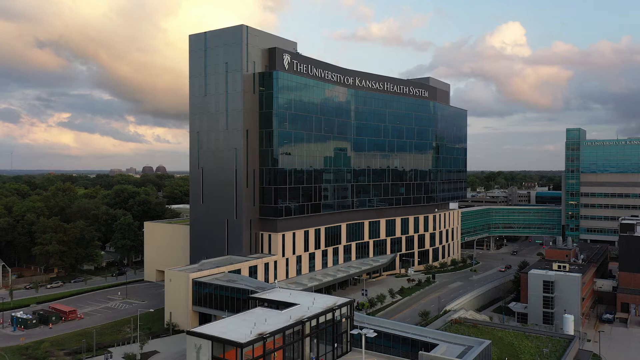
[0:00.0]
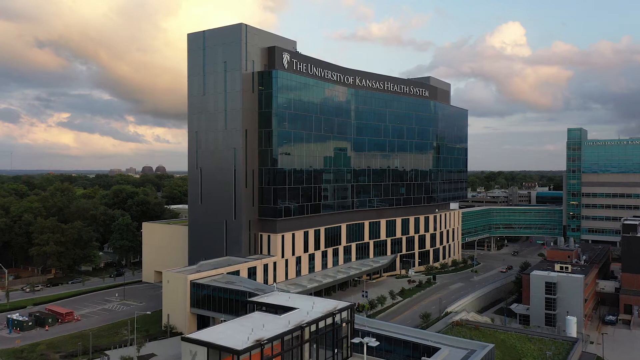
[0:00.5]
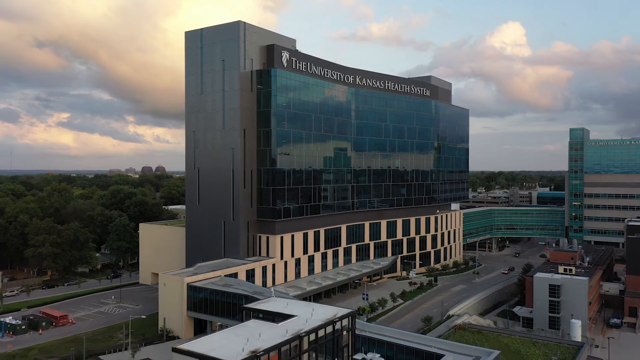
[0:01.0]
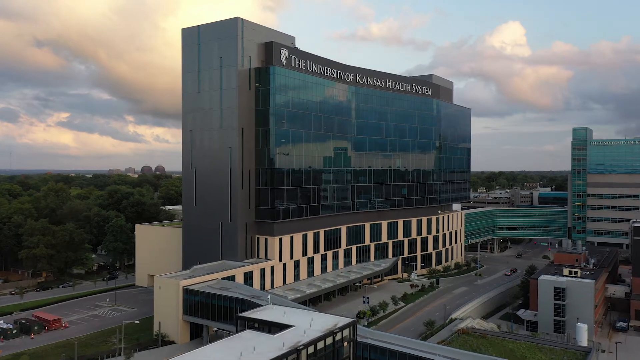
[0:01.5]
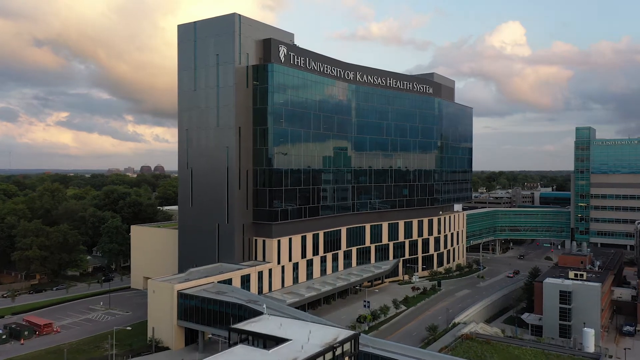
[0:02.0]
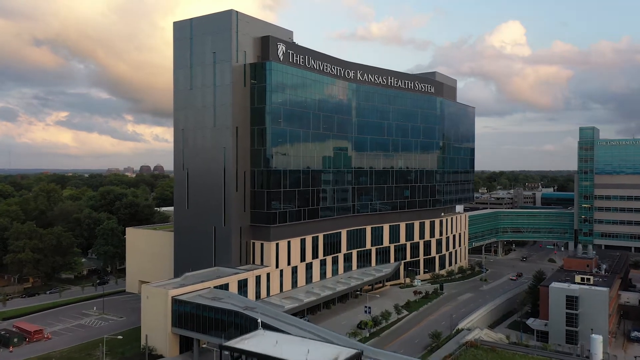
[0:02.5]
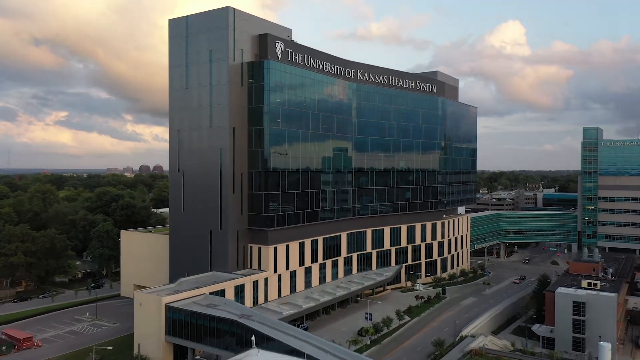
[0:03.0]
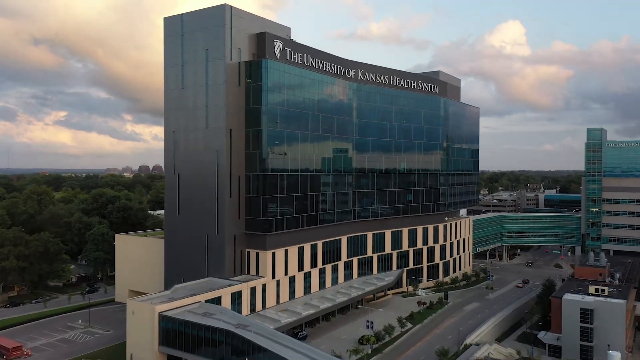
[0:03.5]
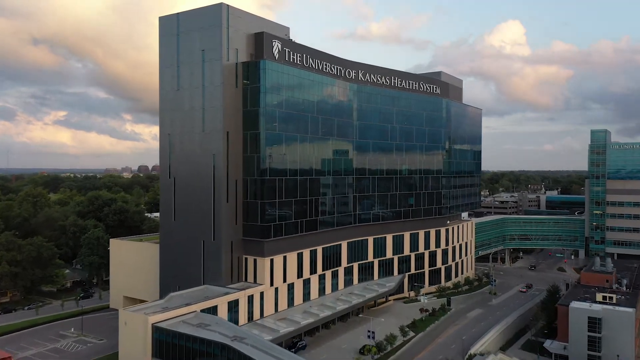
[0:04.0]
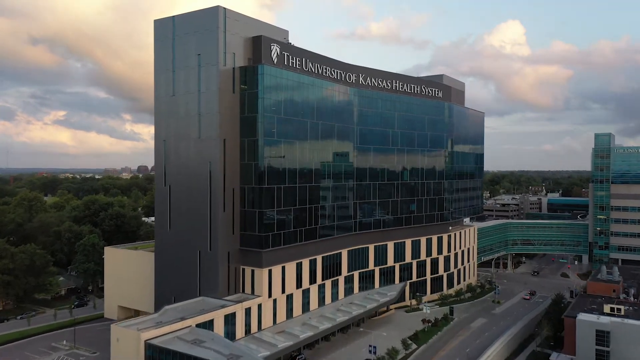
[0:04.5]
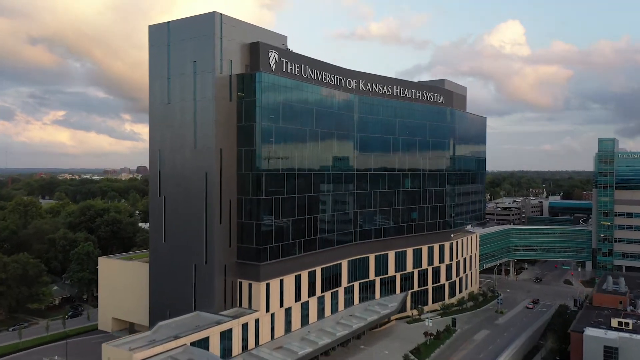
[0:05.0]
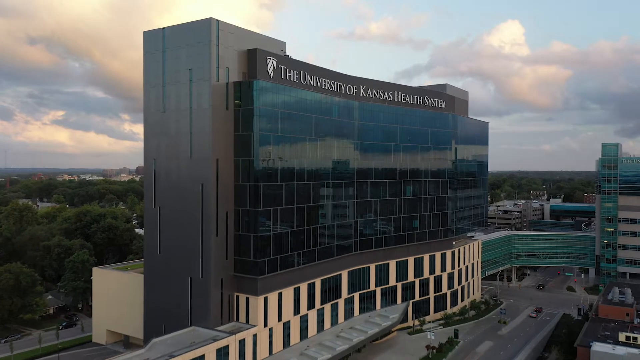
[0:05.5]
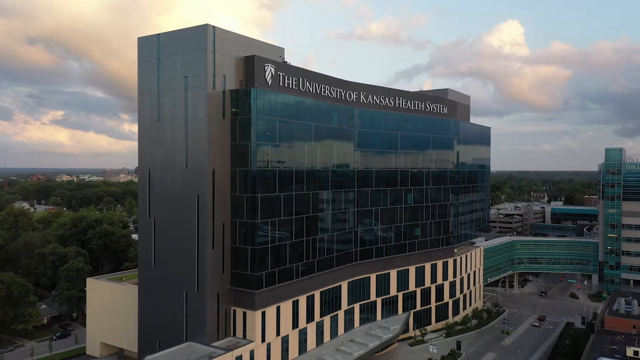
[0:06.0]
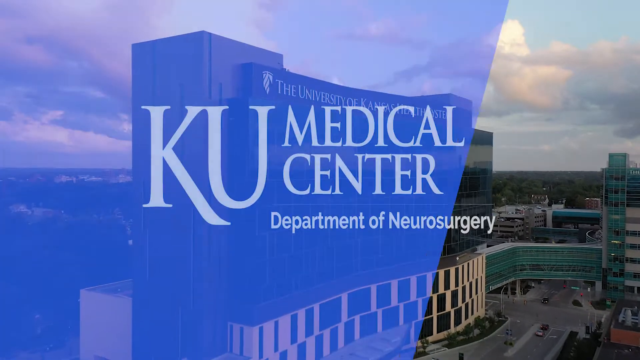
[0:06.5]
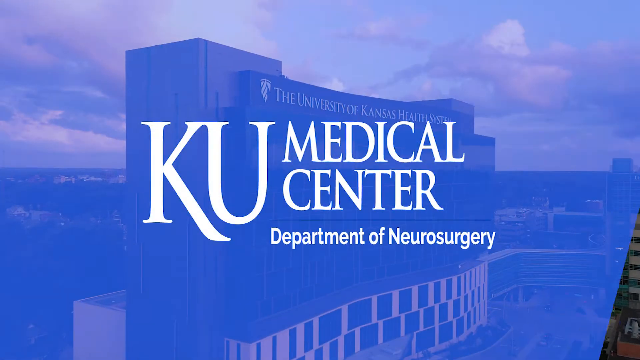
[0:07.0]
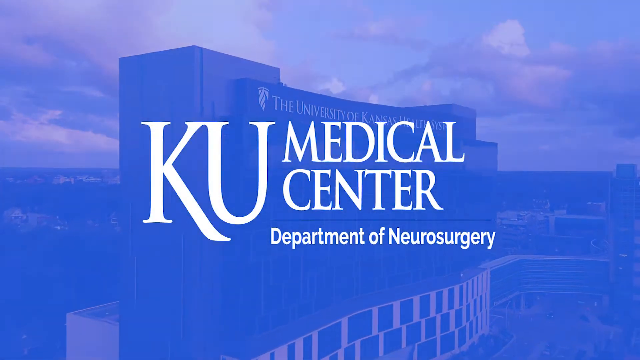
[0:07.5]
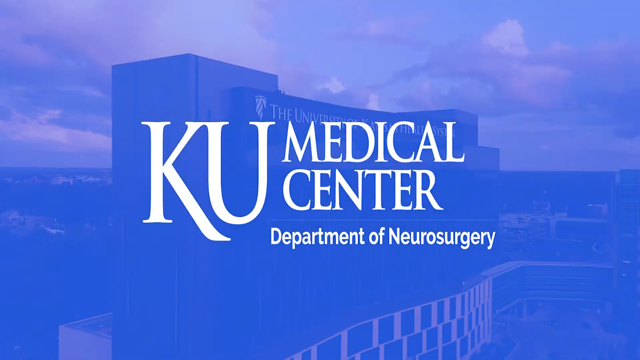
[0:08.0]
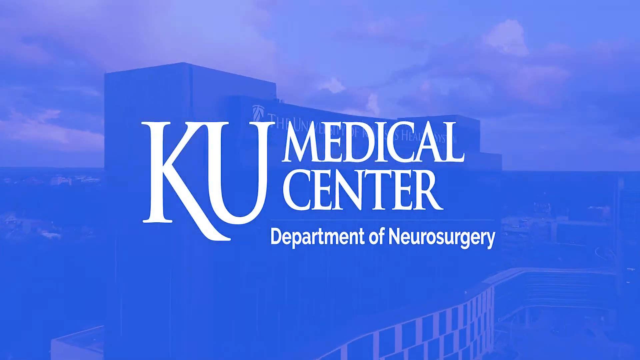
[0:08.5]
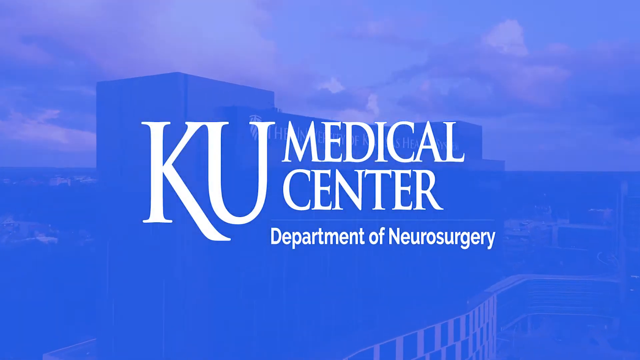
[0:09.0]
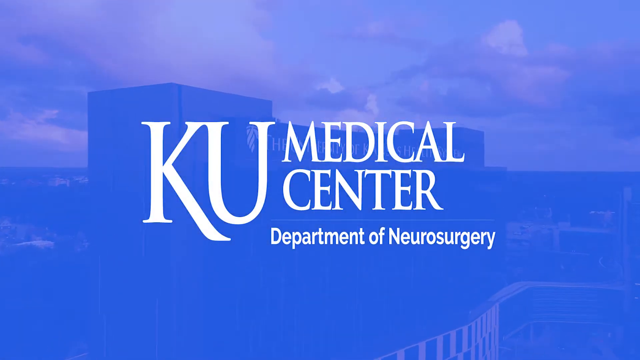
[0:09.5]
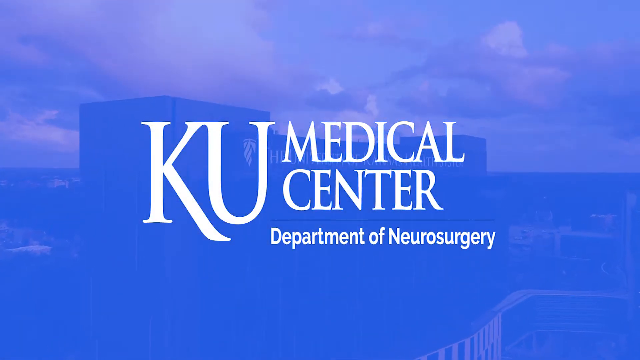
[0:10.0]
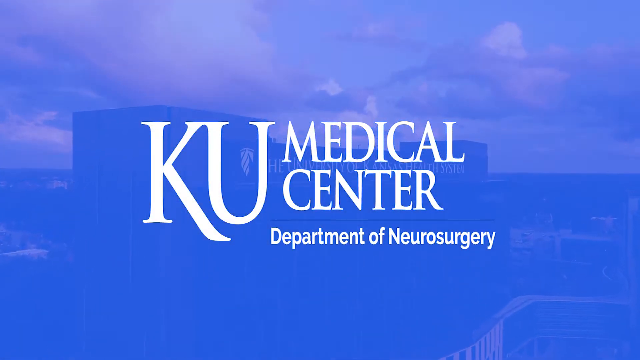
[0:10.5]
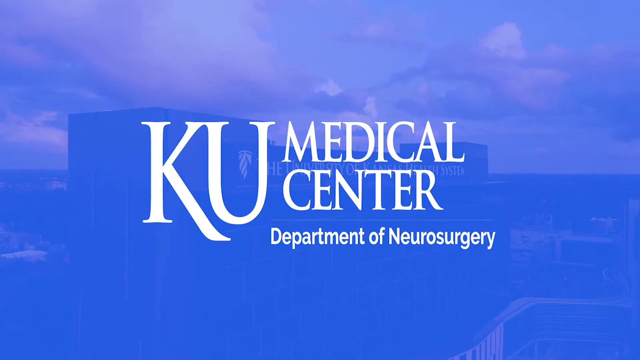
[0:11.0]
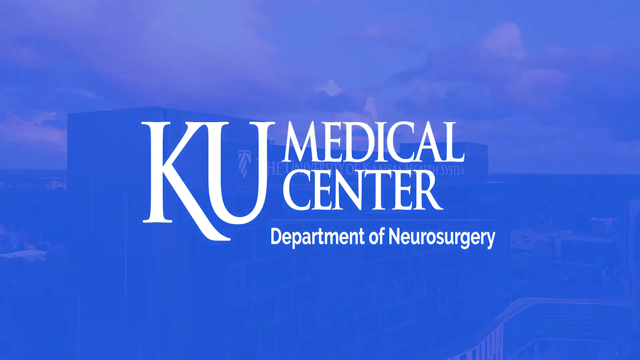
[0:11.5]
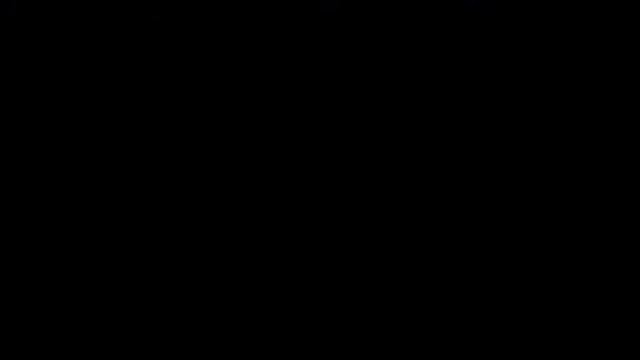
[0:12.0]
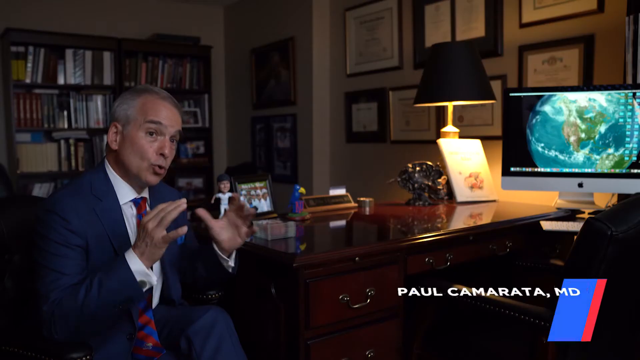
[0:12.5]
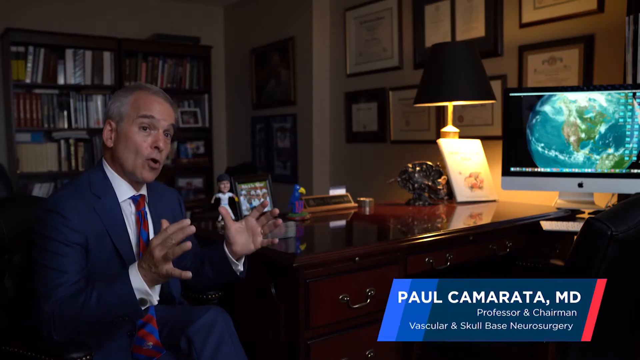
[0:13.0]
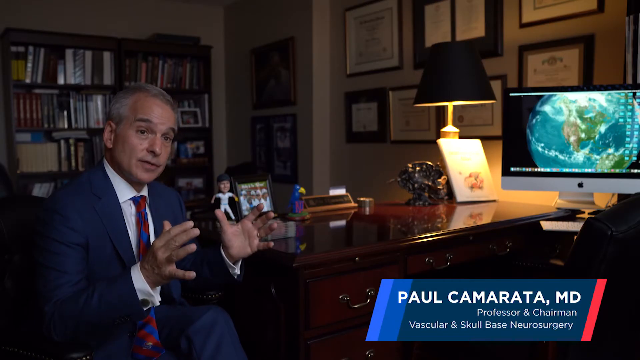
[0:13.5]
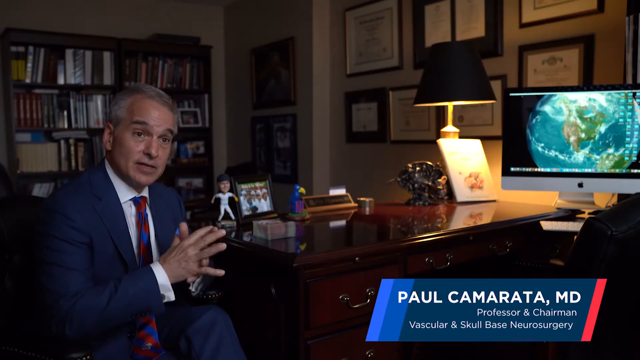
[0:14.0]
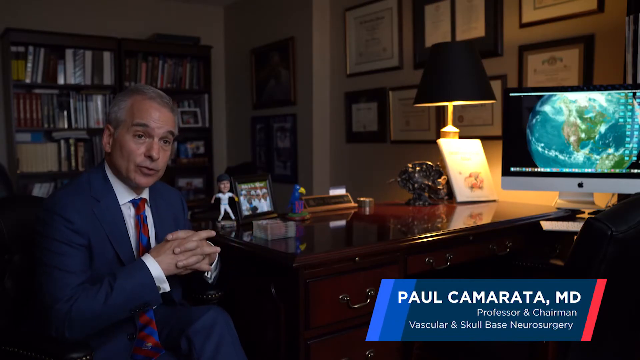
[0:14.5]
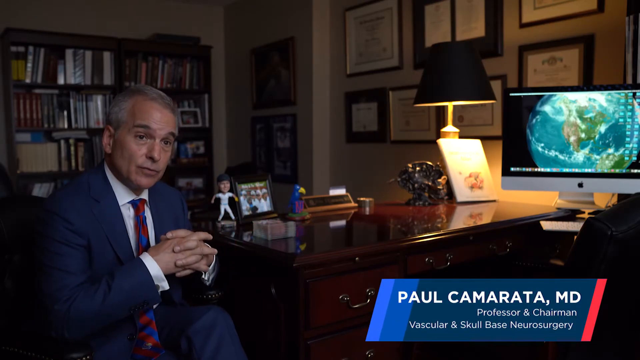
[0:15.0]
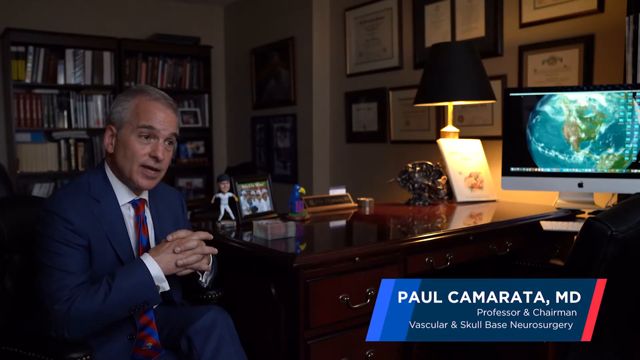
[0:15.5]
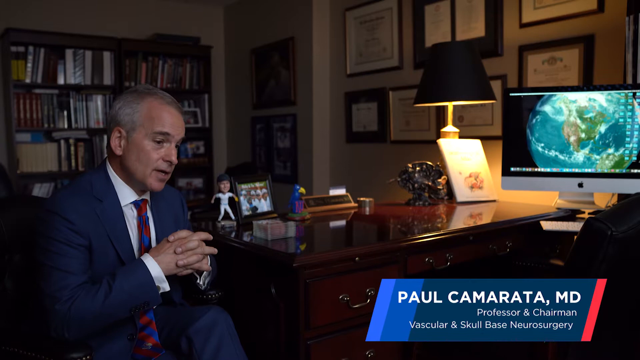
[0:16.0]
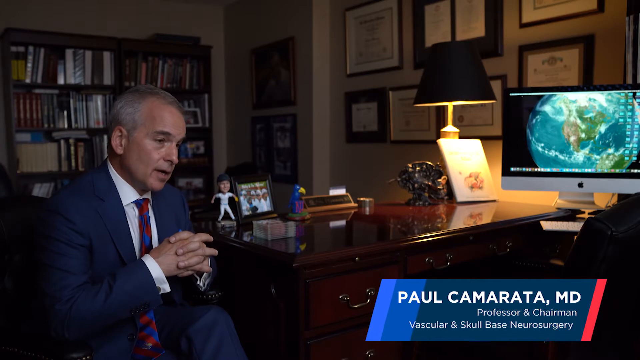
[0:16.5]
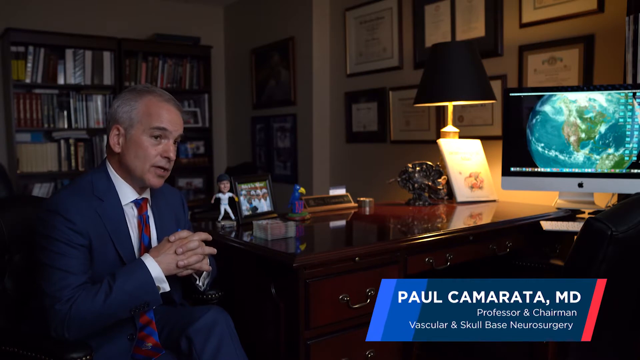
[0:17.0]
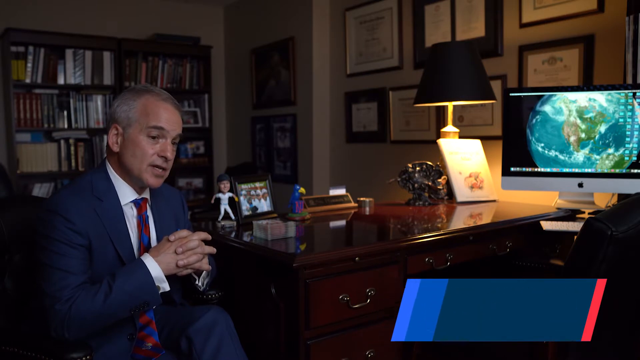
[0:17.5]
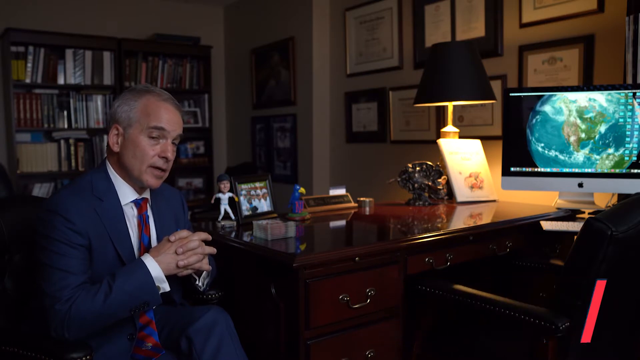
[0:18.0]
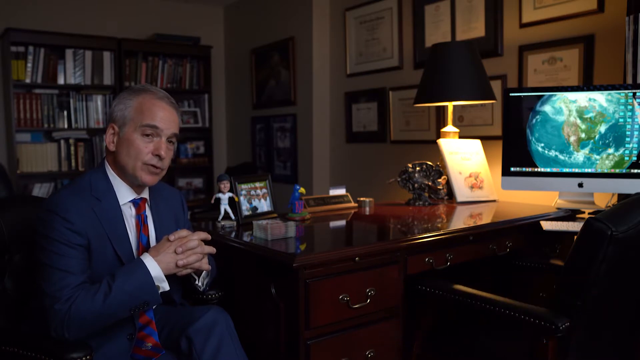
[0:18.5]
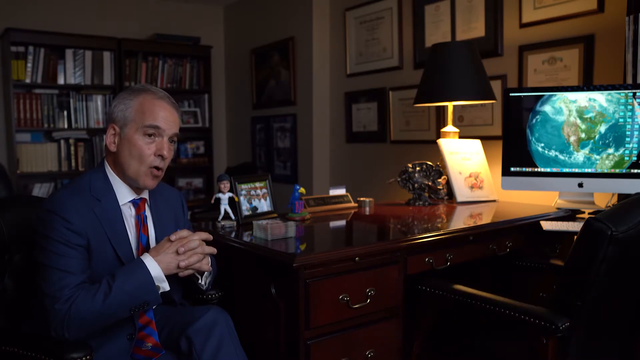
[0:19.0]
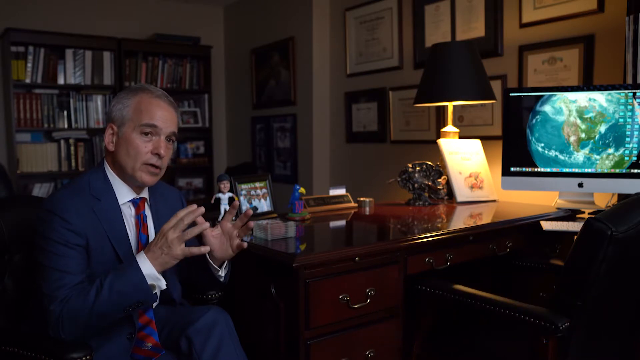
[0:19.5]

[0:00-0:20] The video opens with an outside, sort of aerial shot of a large building. At the very top middle of the building, white text reads "the University of Kansas Health System". Below that is a very reflective surface, a bunch of mirrors that seem to reflect the off-camera city landscape. Behind the building are a bunch of trees on the far left and in the middle right. Above is a sky with large clouds: the left side is mostly full of clouds, the middle shows some blue sky, and the top right is mostly clouds with some blue sky poking out. The camera slowly zooms in on the building and slightly starts to glide upwards toward its top. A bluish overlay appears with white text reading "KU Medical Center, Department of Neurosurgery", and the building remains visible behind this sort of blue transparent layer as the camera continues to glide upwards. The scene changes to a man on the left side of the screen sitting in a chair. He gestures with his hands at his sides before clasping them together, then does the same motion once more.